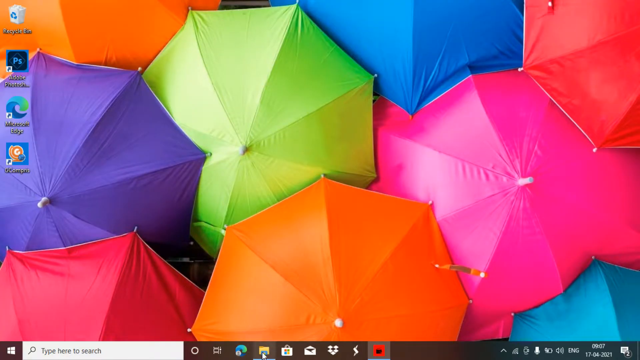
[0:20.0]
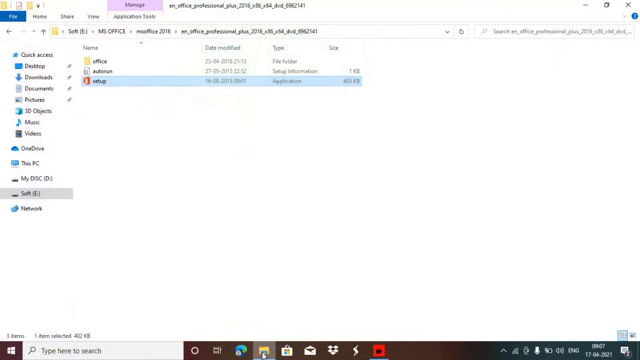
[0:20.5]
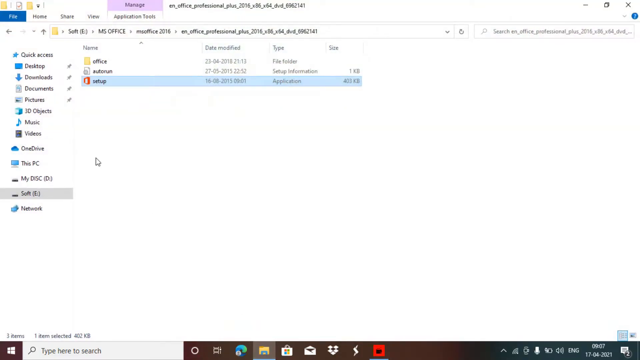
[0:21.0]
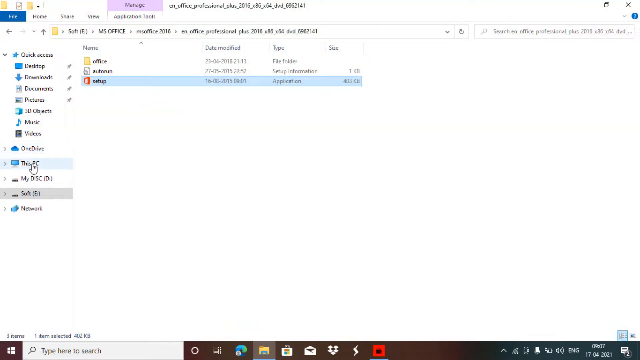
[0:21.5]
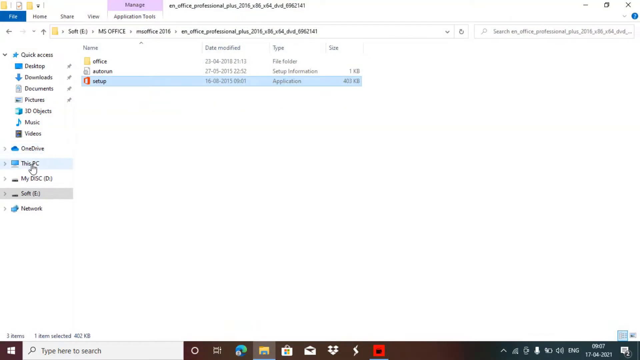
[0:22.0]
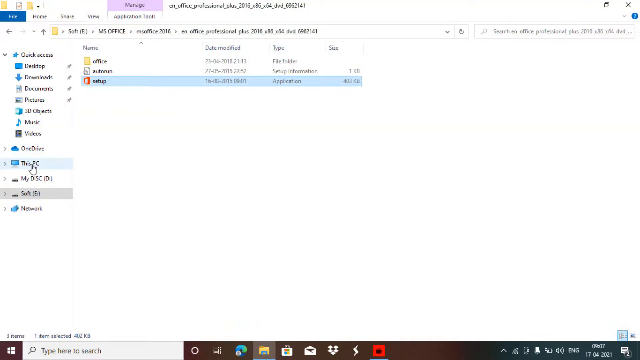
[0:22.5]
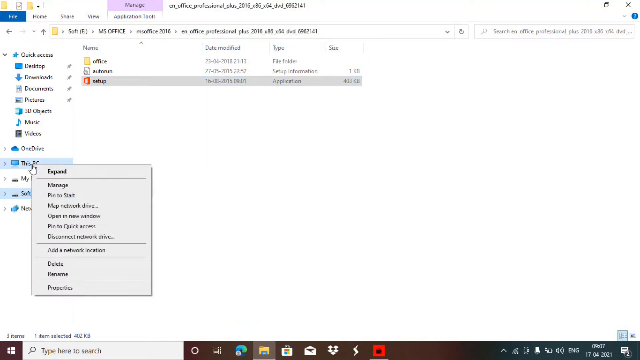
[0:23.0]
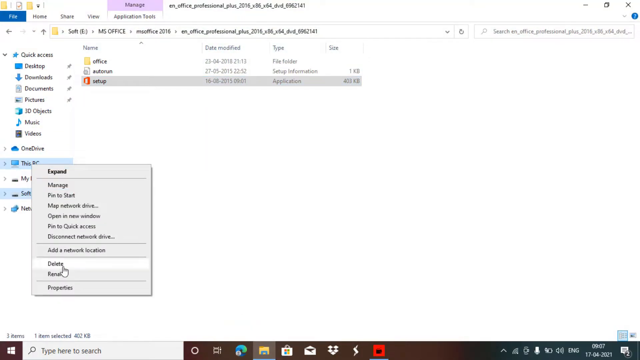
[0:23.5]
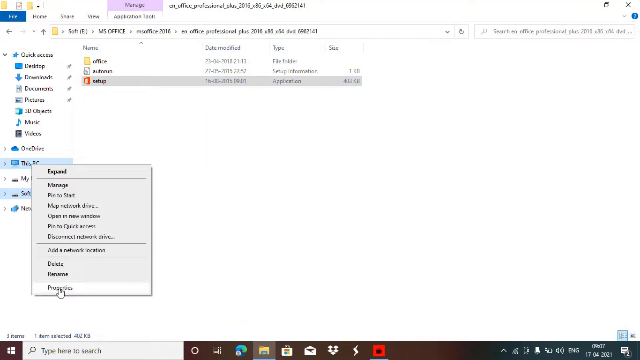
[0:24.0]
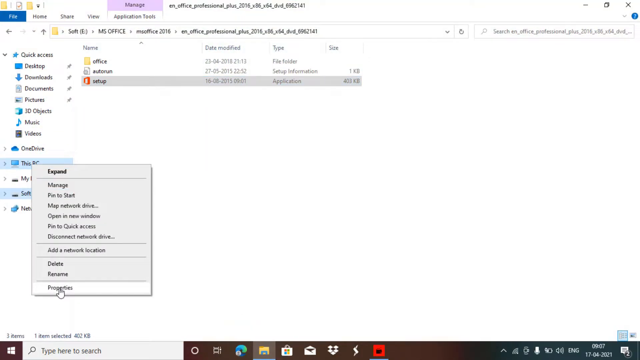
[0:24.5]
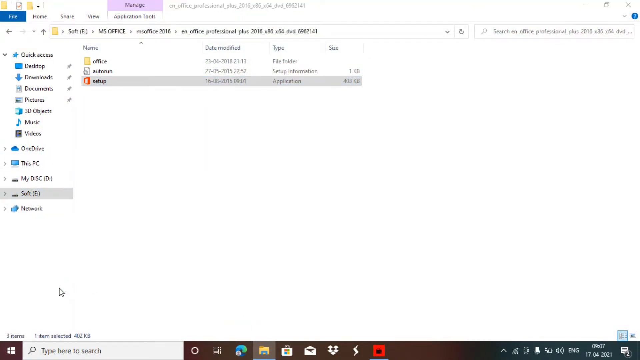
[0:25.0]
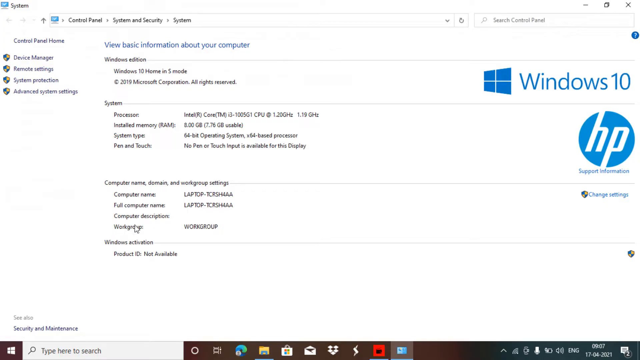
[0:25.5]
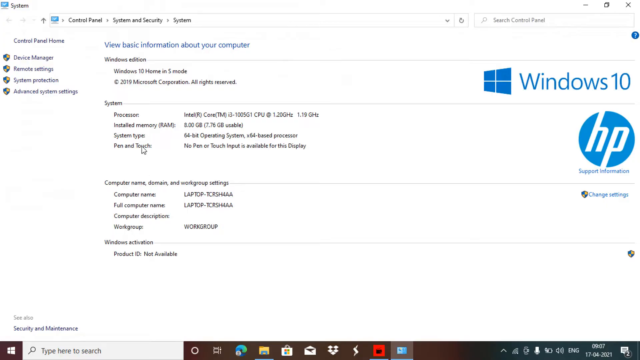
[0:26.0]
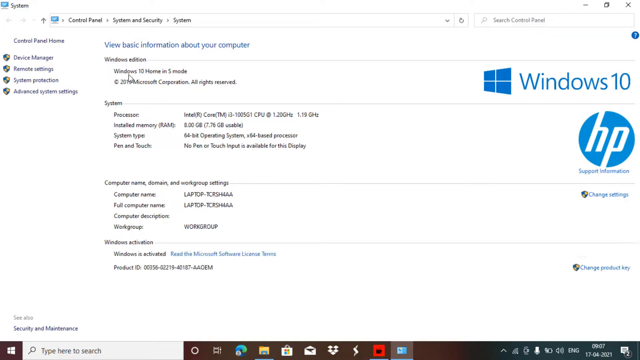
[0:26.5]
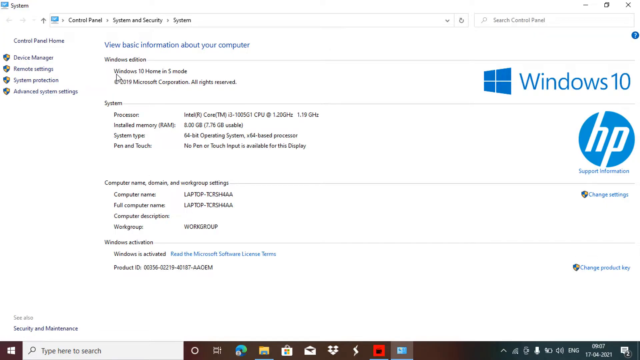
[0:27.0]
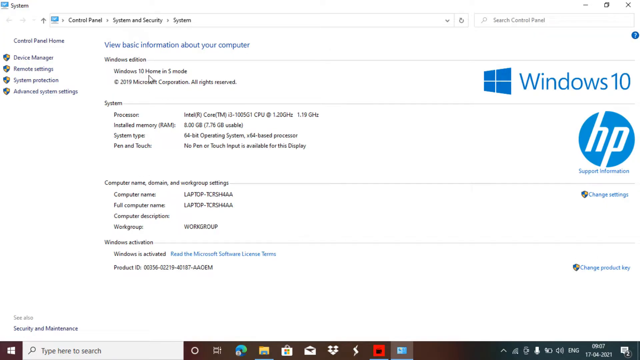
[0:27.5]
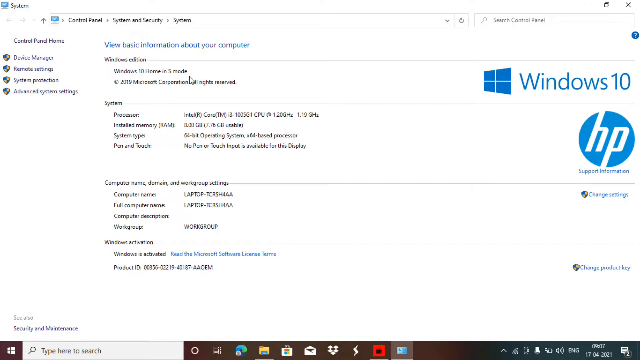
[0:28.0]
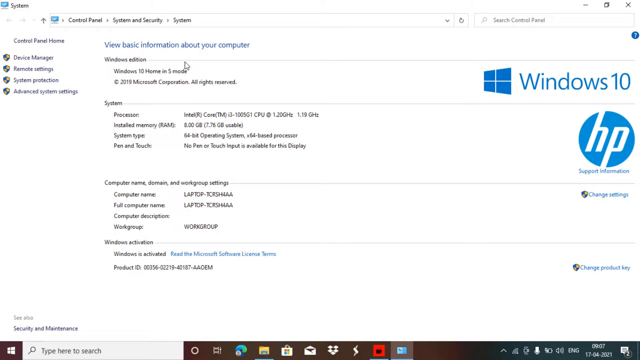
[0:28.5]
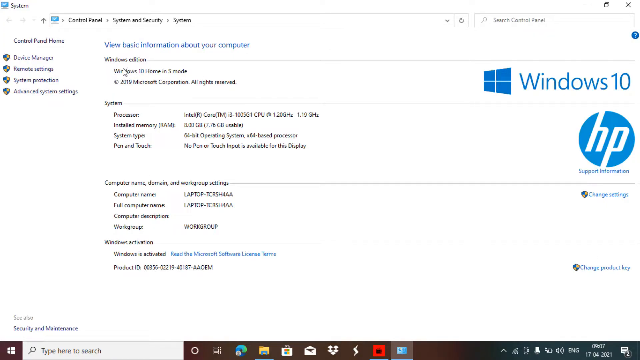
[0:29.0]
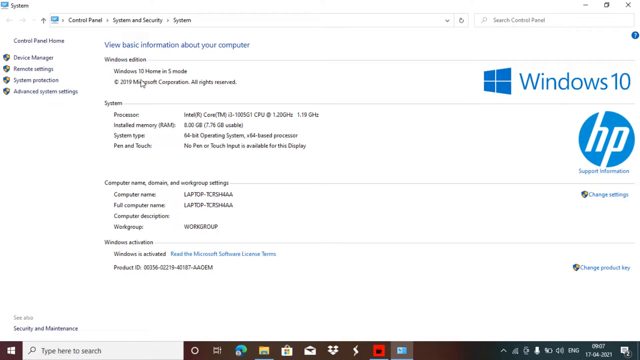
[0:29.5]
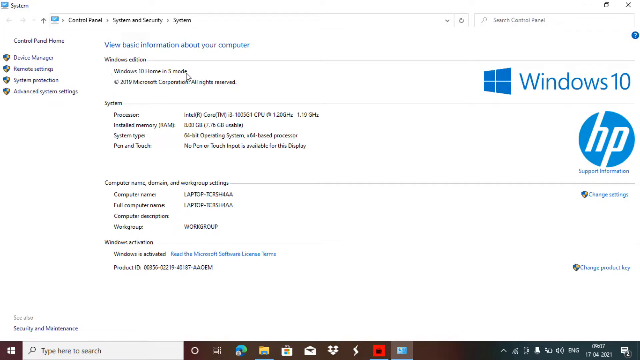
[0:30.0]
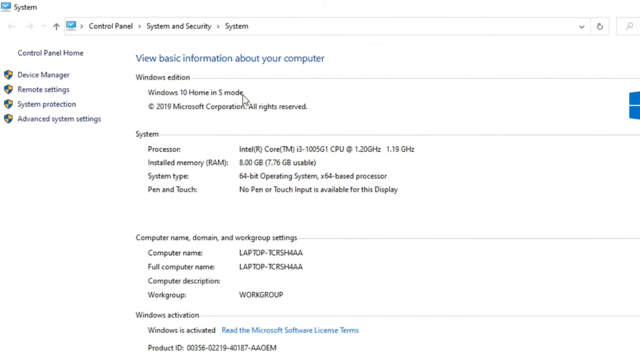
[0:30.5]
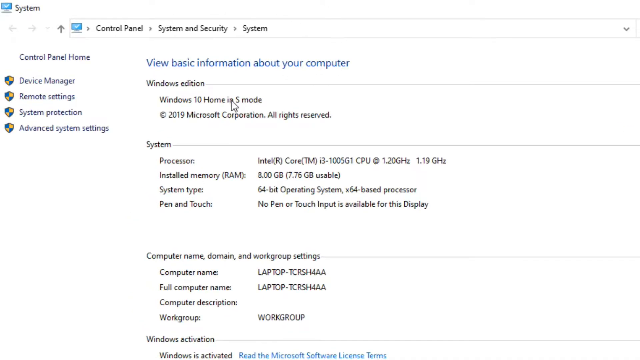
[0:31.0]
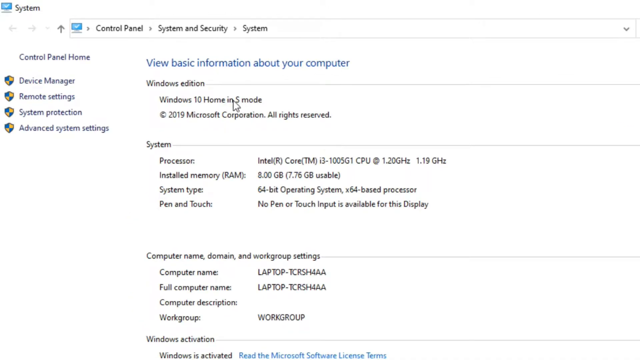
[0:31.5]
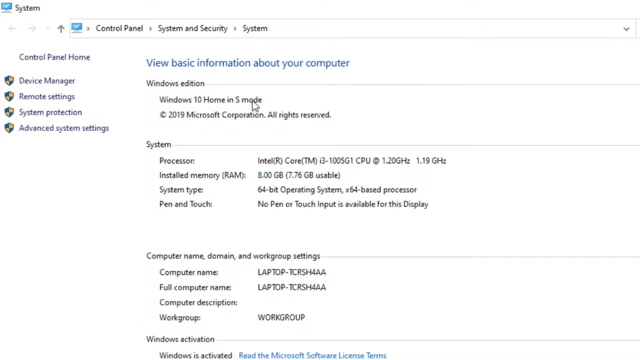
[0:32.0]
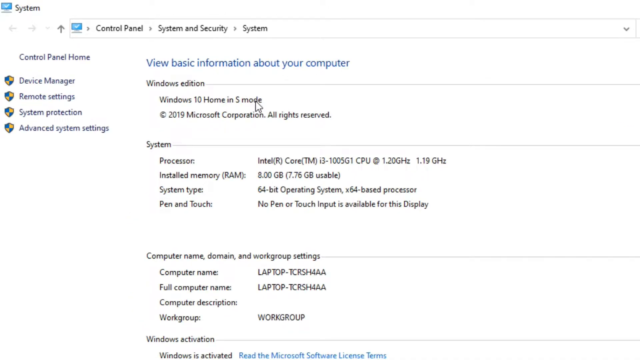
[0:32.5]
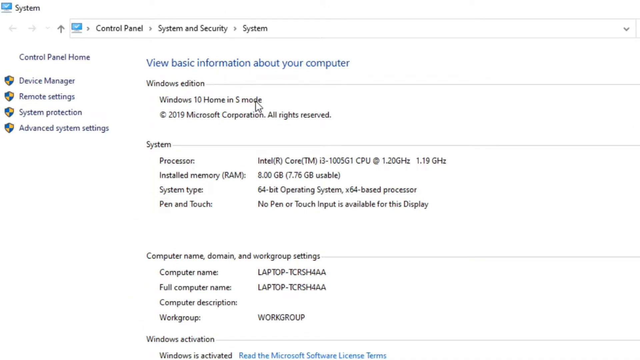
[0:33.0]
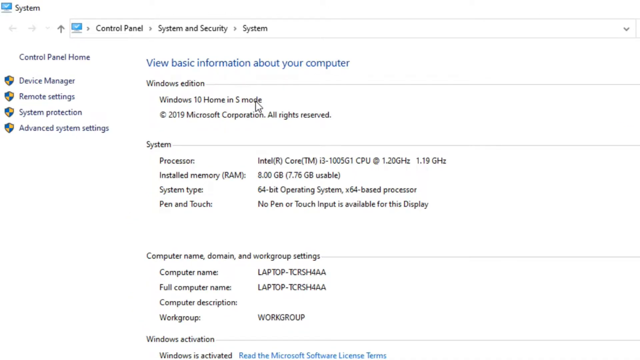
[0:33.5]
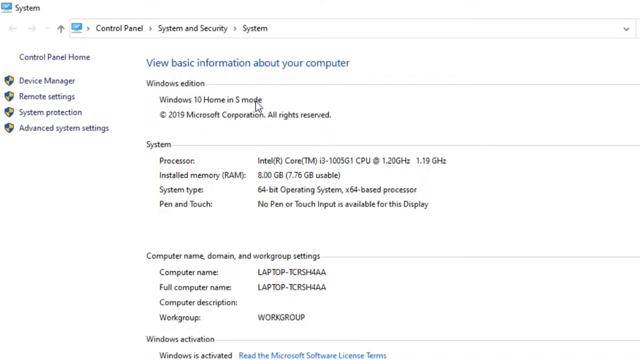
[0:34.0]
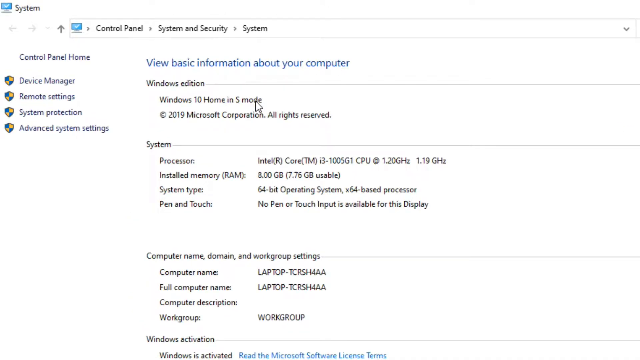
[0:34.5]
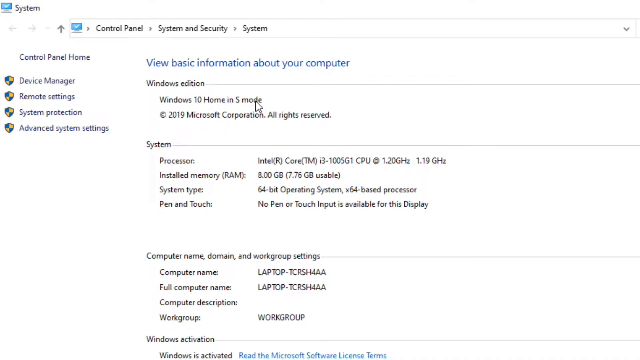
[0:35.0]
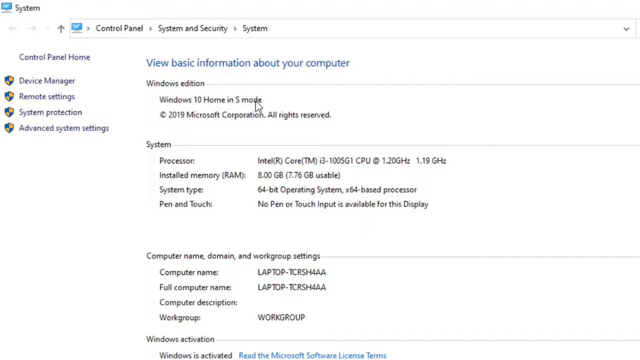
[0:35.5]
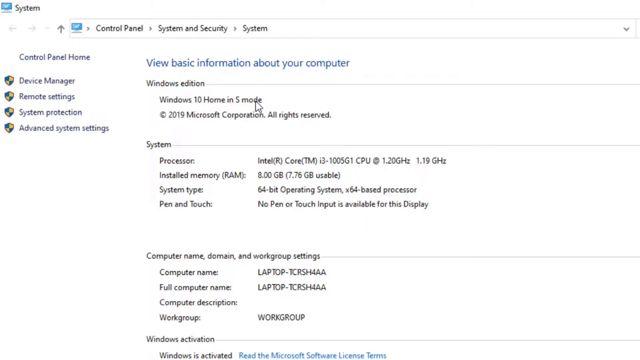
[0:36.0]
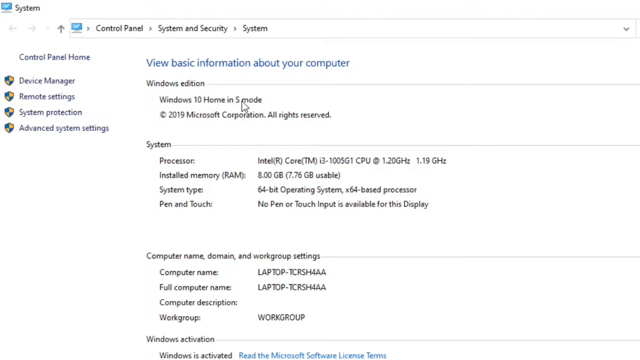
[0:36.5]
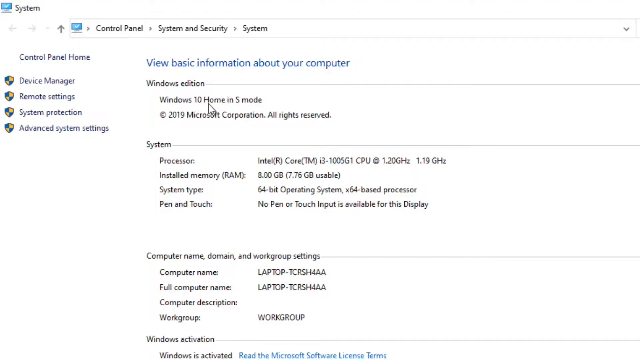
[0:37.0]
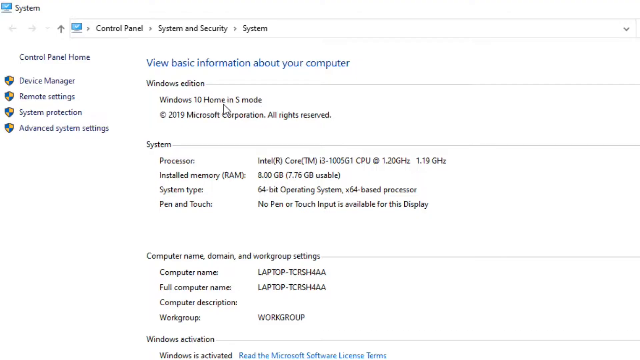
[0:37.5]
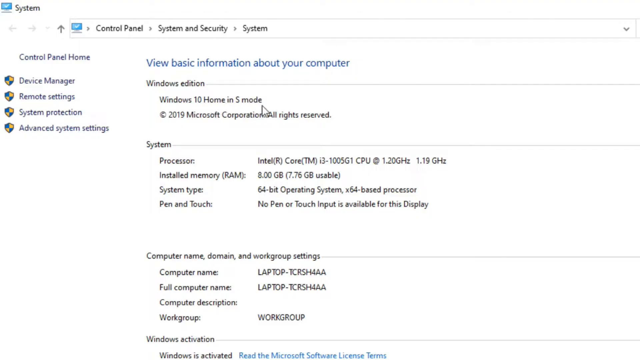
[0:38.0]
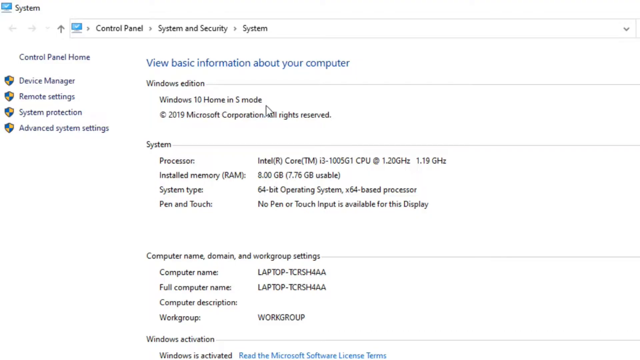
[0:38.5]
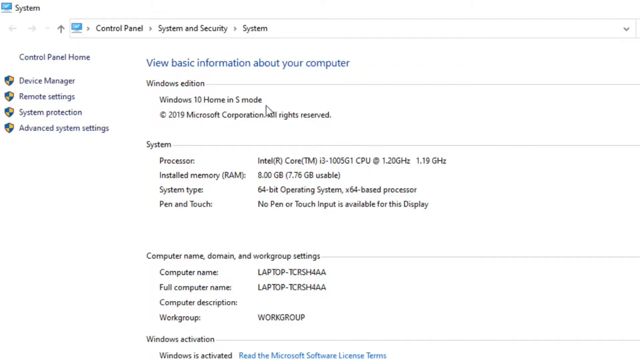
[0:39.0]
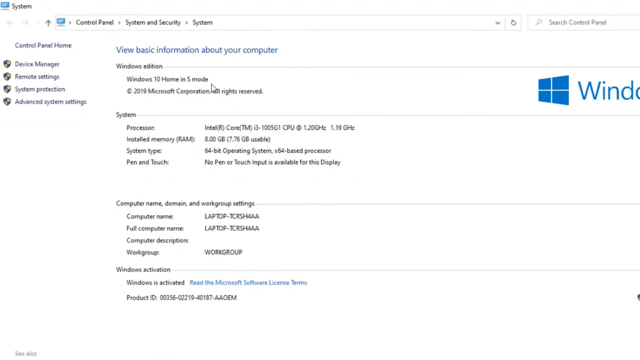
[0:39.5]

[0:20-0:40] The person opens the files window again, hovers over This PC, right-clicks and chooses Properties, and the Properties information pops up. They sort of highlight the Windows edition, which reads "Windows 10 Home in S Mode"; the mouse kind of hovers over "Home in S Mode" while the view zooms in a little, and then it zooms out. On the right side there is a Windows 10 logo and an HP logo. In the sidebar, "Device Manager", "Remote Settings", "System Protection" and "Advanced System Settings" each have what looks like a blue and yellow badge symbol on their left. On the right, below the HP logo, text says "Change Settings", and below that is text beginning "Change Product", also with badges.